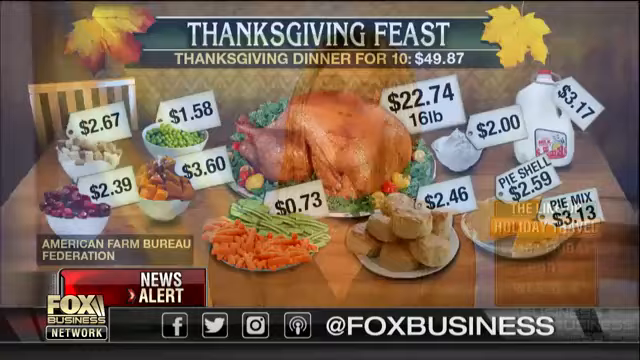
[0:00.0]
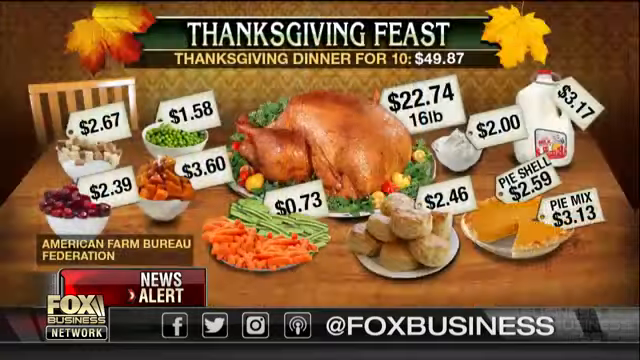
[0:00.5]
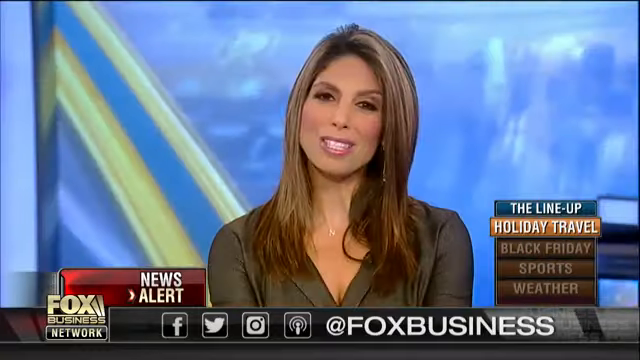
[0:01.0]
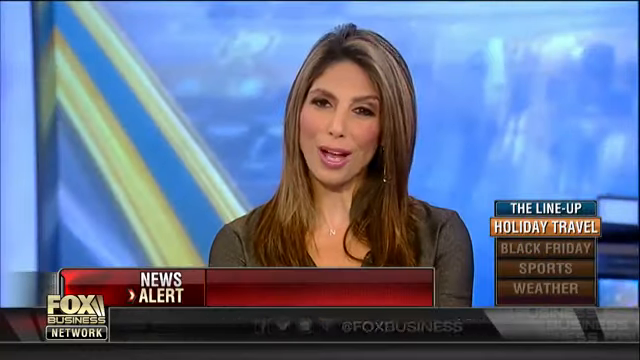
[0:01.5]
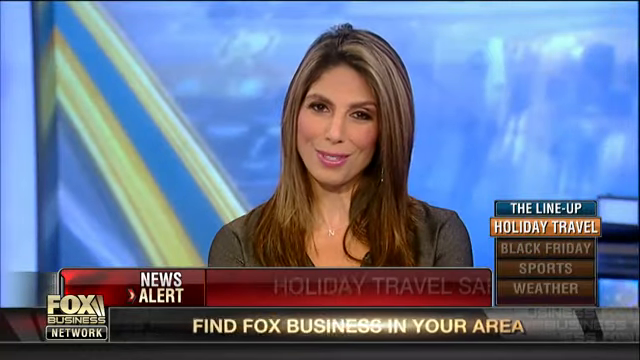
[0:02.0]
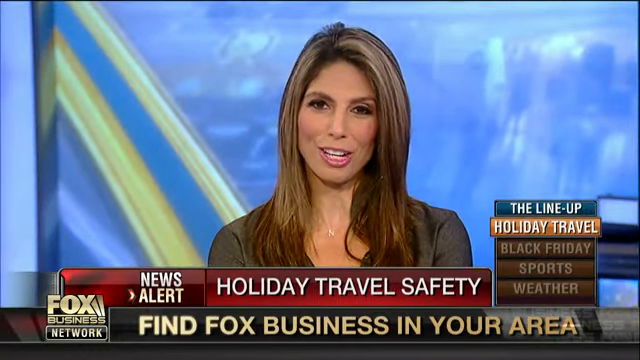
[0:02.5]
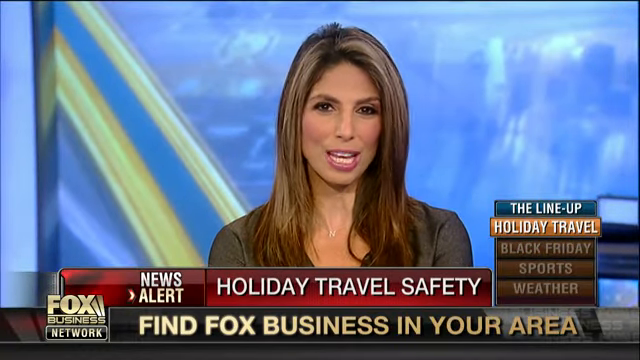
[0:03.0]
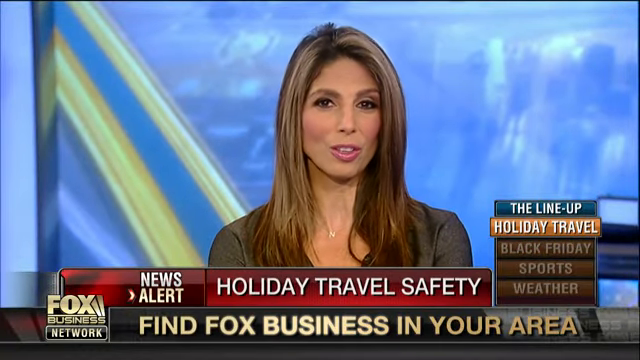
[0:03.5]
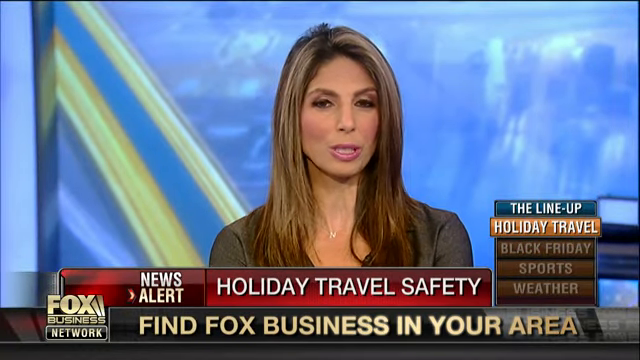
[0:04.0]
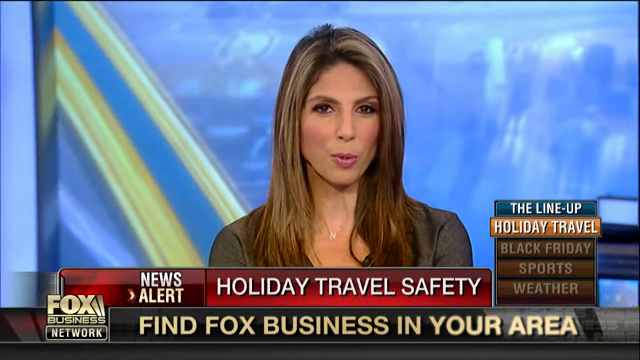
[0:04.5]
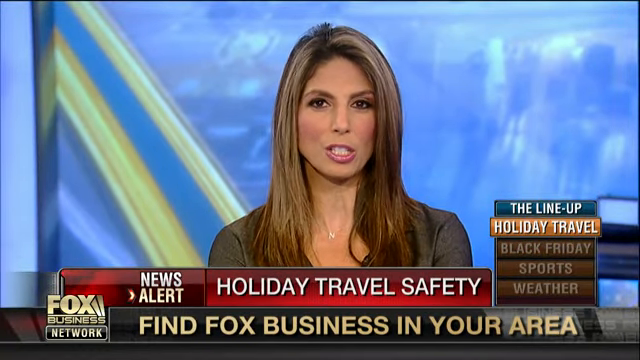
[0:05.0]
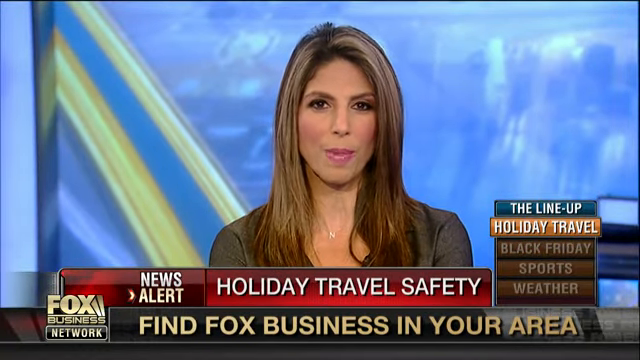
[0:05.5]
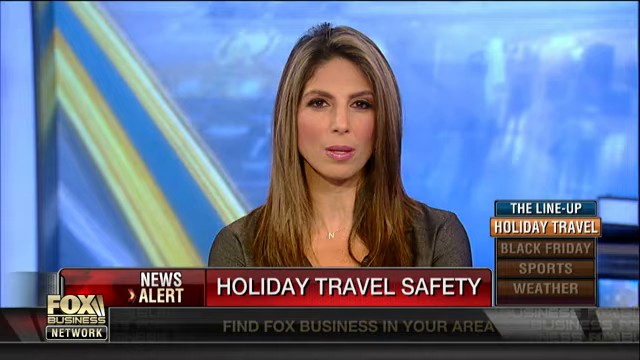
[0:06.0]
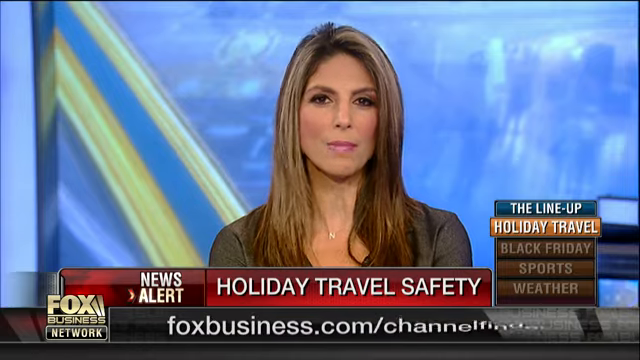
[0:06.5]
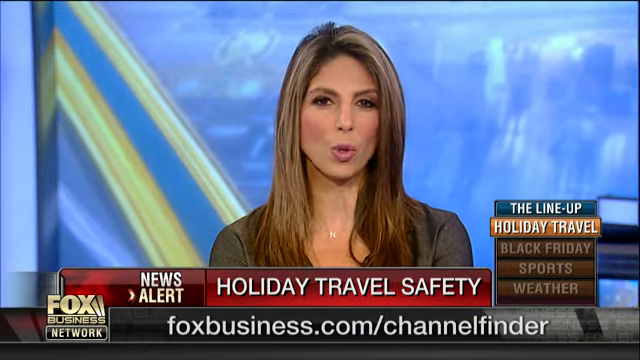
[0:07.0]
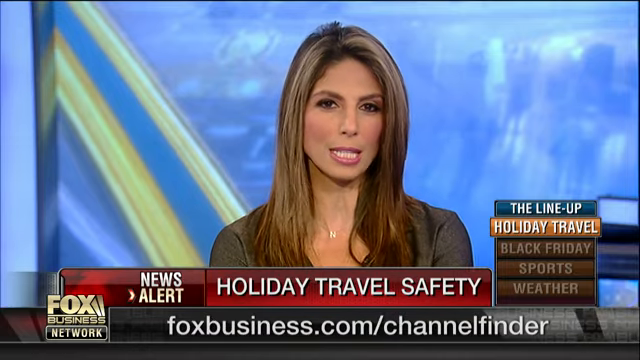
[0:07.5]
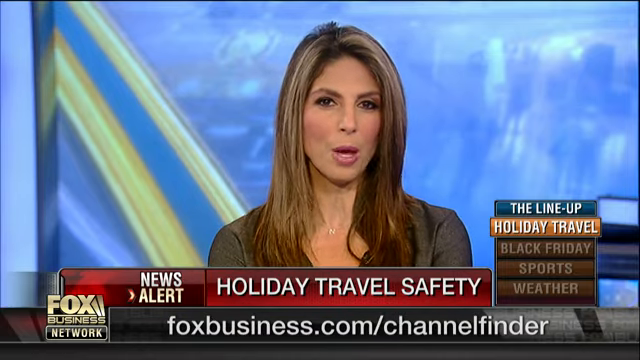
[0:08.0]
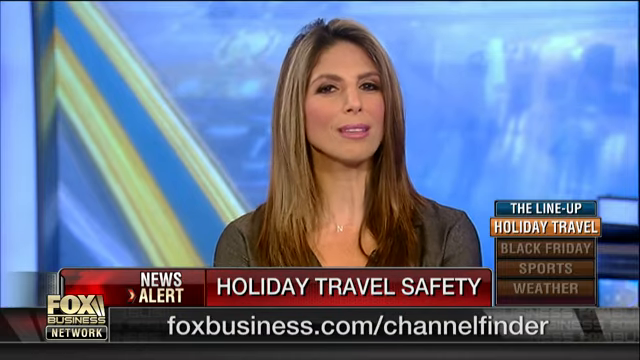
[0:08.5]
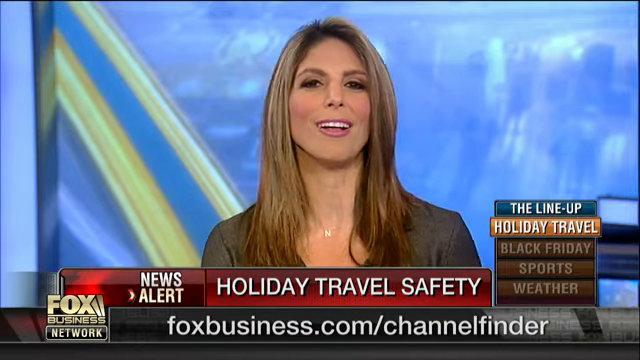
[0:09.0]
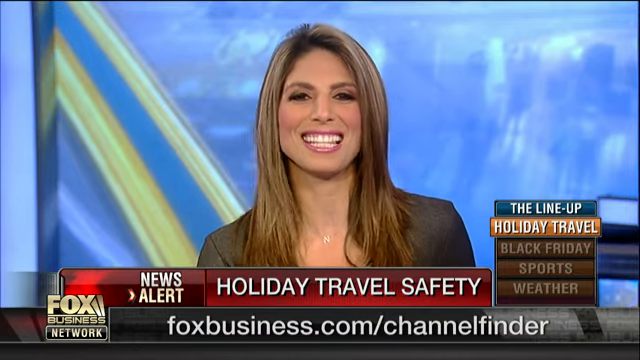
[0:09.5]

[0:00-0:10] An advertisement for what looks to be a Thanksgiving feast appears. The dinner is laid out on a table, featuring a turkey weighing 16lb, advertised at 22.74 dollars. Around it are other items associated with a Thanksgiving dinner, such as vegetables, individually plated with prices next to them. It appears to say that the American Farm Bureau Federation can provide this dinner for 49.87 dollars. The news alert then cuts to a very beautiful female news reporter who is happy and smiling. She has brown highlighted hair worn down, her makeup is done perfectly, and she wears a brown top. The screen behind her is mainly blue with some yellow stripes. Toward the end she flashes a big smile at the camera, showing perfect teeth.